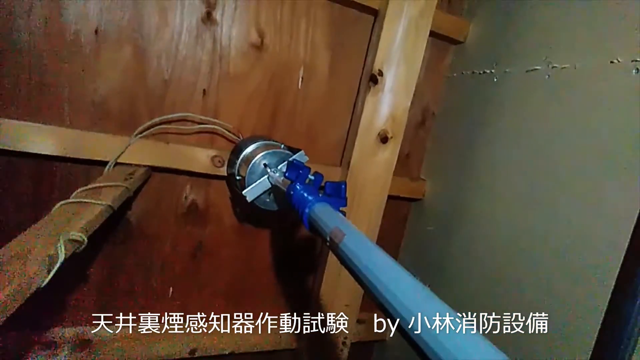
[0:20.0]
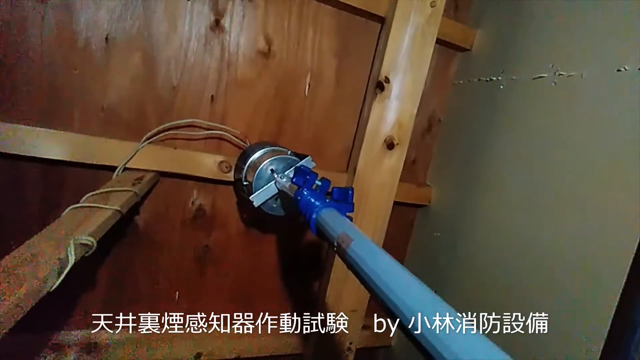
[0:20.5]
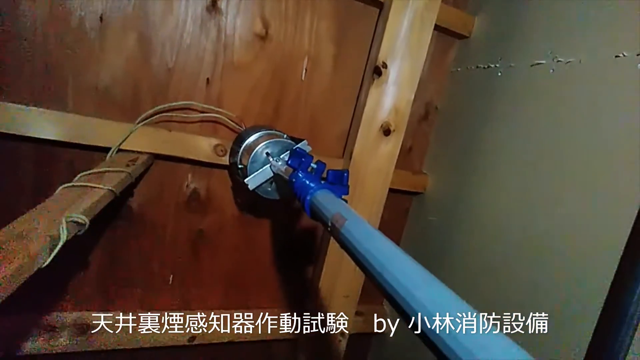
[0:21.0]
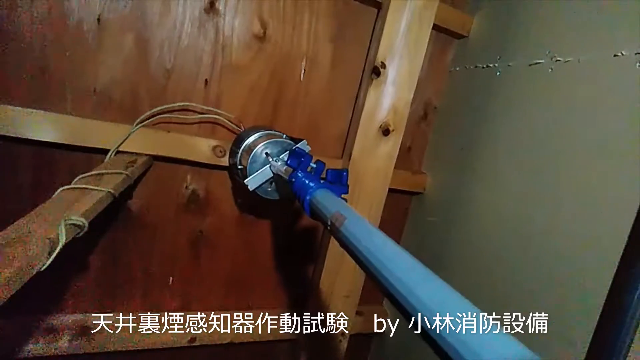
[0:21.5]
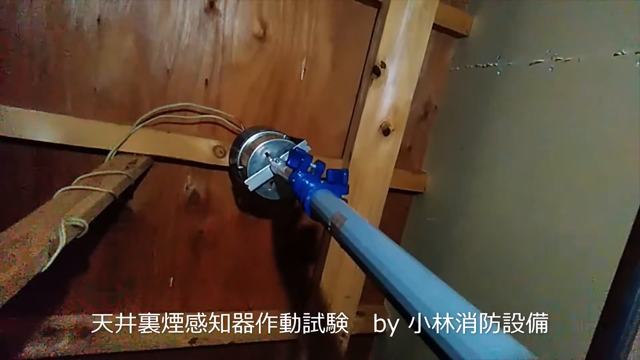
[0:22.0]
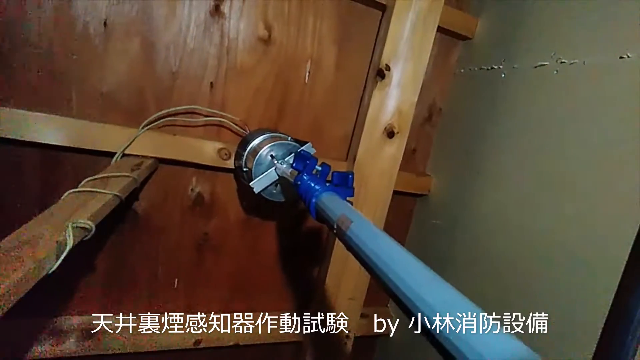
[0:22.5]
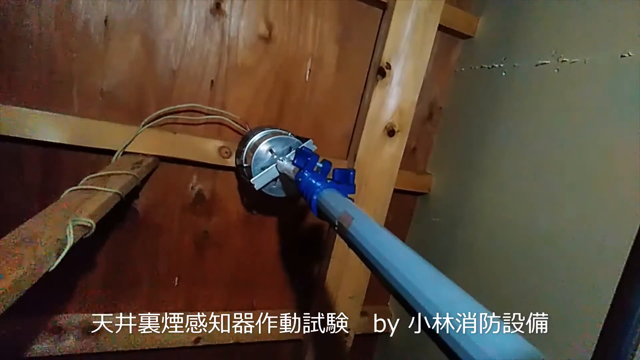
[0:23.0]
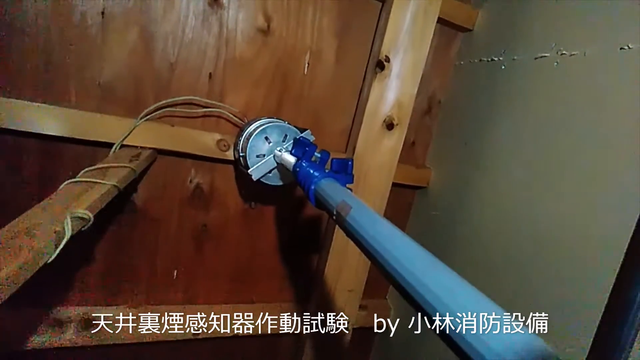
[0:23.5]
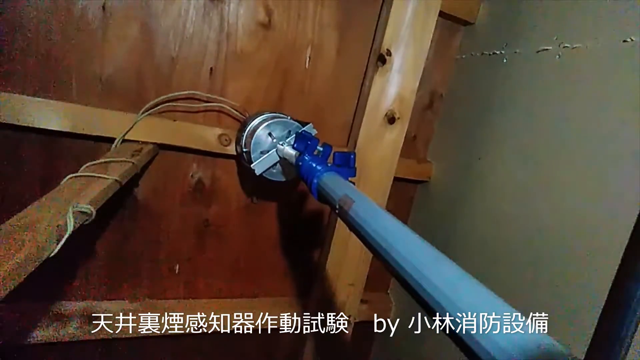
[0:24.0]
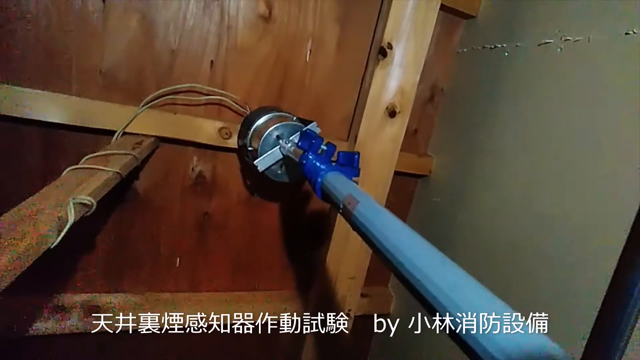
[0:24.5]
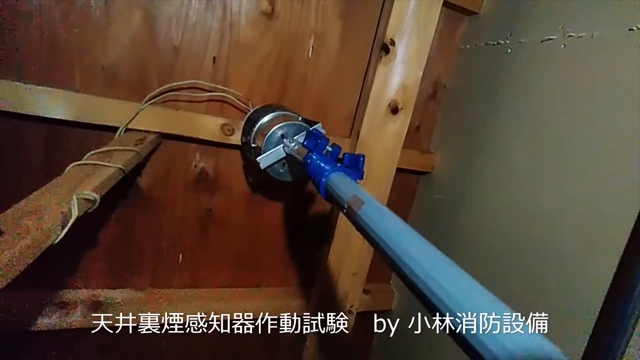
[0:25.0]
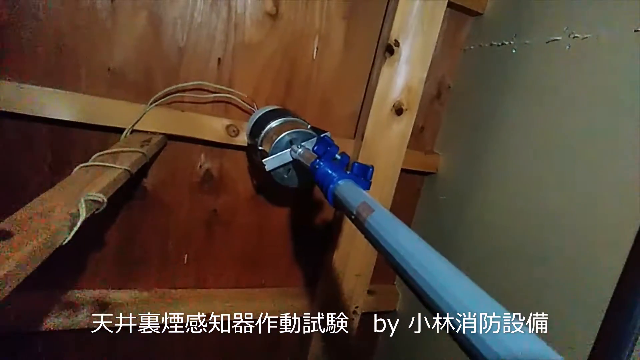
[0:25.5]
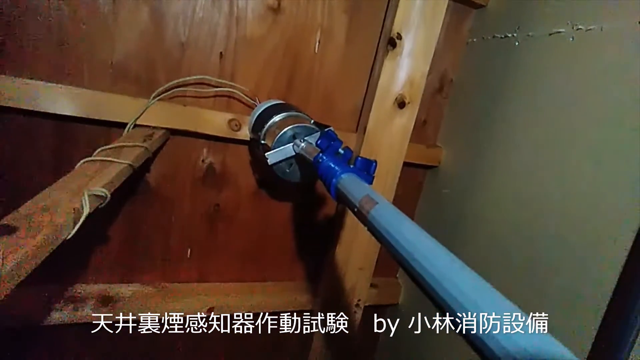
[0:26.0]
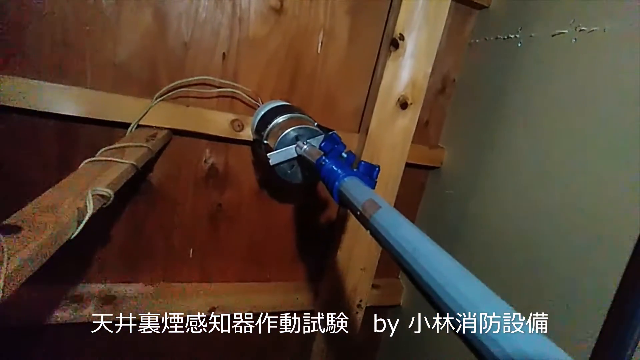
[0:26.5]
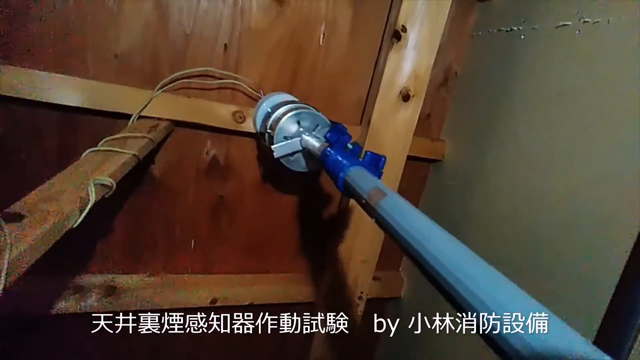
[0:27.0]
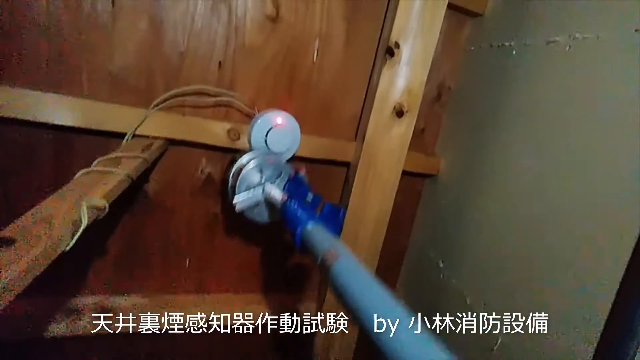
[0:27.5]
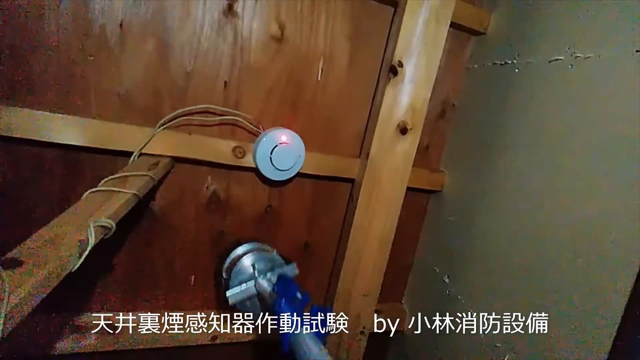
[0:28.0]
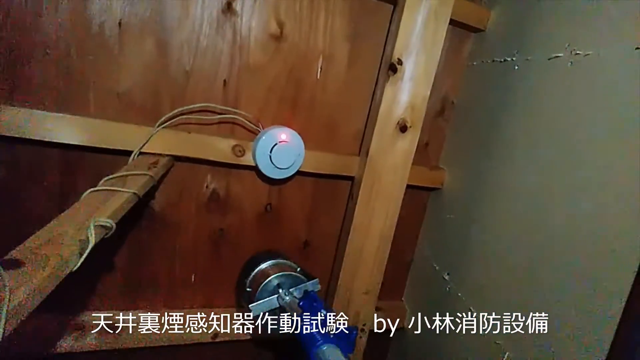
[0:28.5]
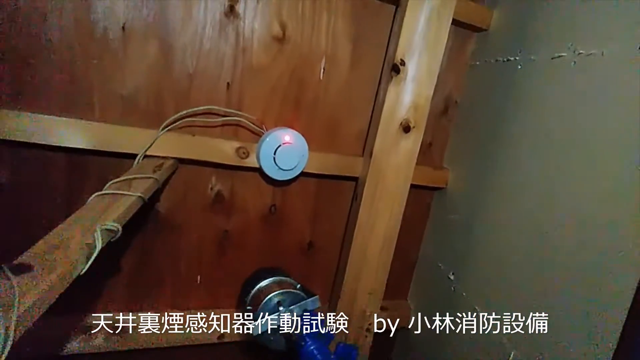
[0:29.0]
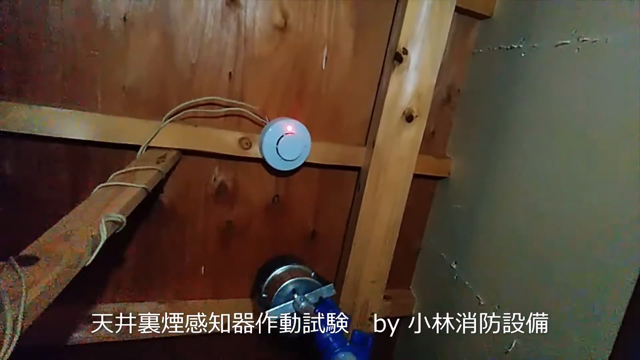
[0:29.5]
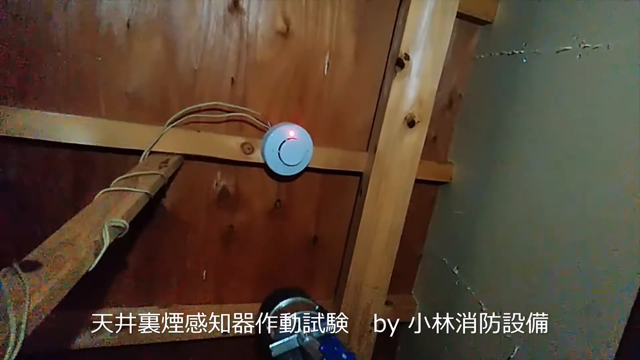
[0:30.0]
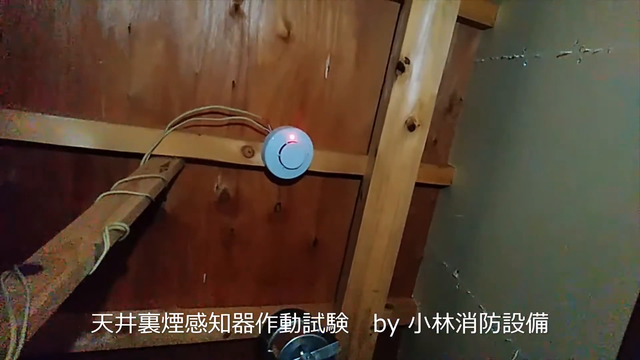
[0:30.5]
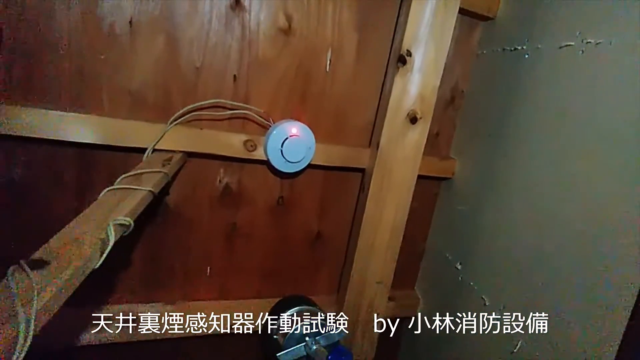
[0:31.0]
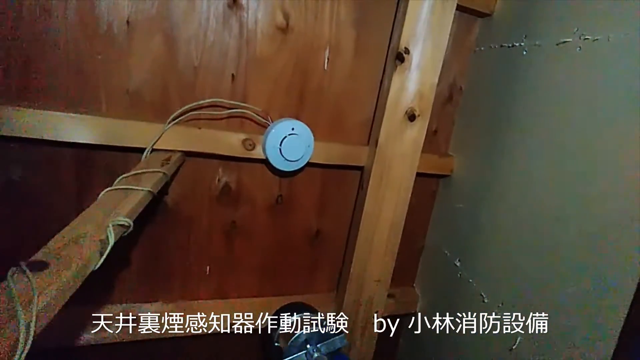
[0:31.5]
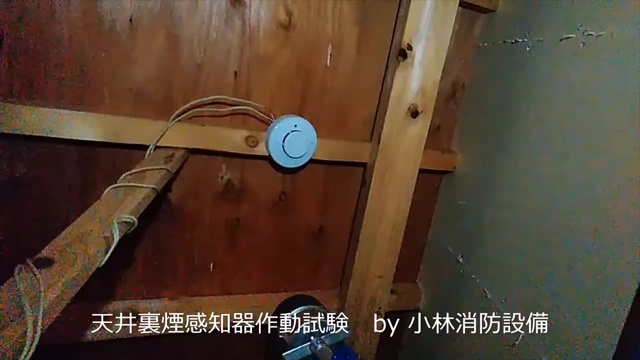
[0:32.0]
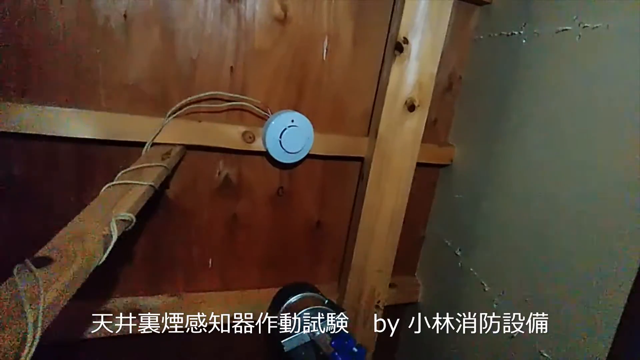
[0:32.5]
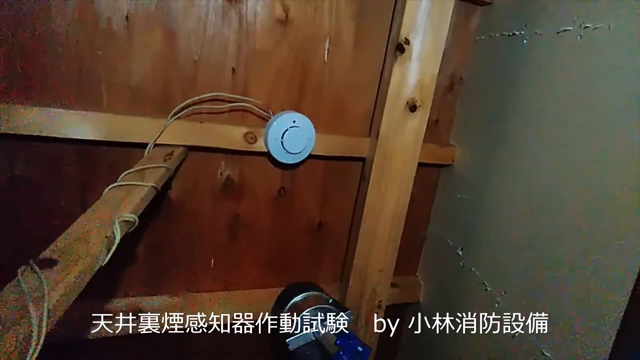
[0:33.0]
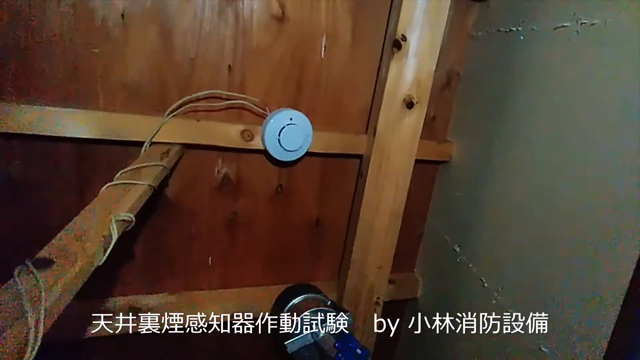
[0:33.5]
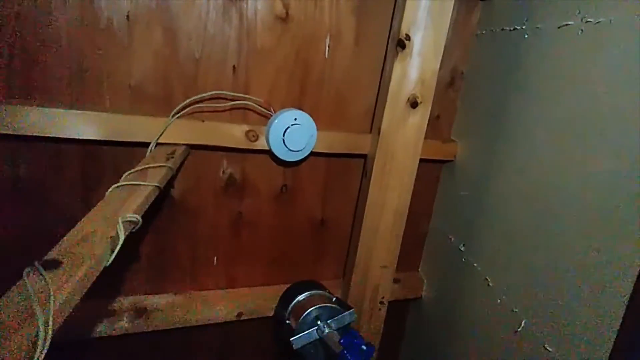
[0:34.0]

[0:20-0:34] The item presses into the front of the smoke detector, swiveling a little as pressure is applied. When it is taken away, the smoke detector's internal light is lit up red. The tool is possibly releasing a small amount of smoke to test whether the detector works, though this is unclear.